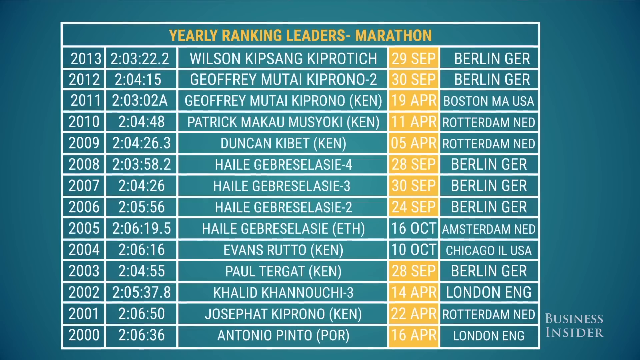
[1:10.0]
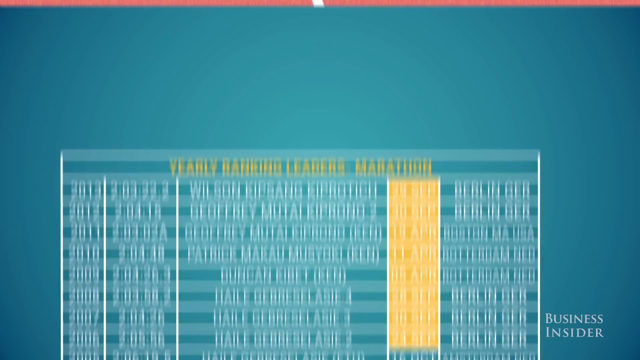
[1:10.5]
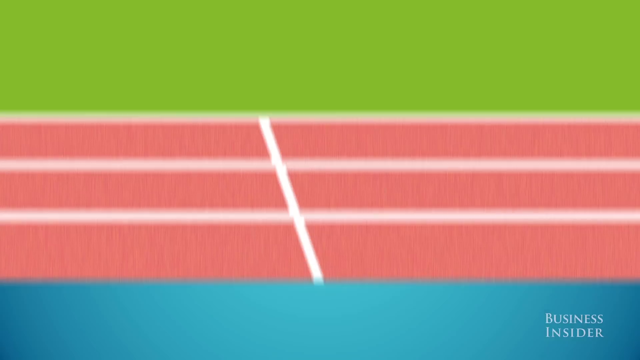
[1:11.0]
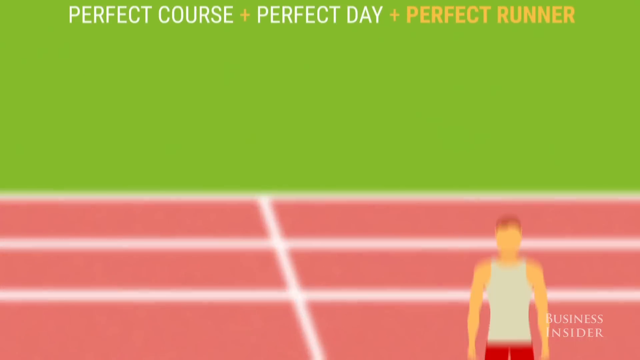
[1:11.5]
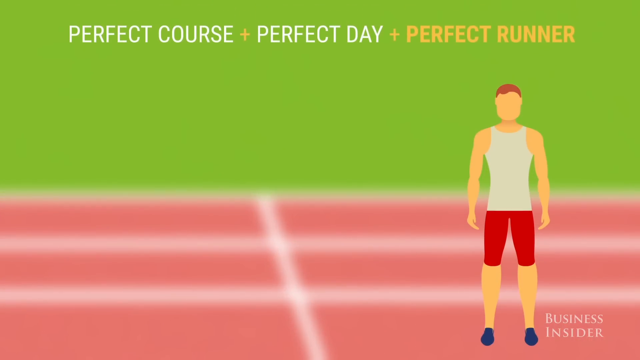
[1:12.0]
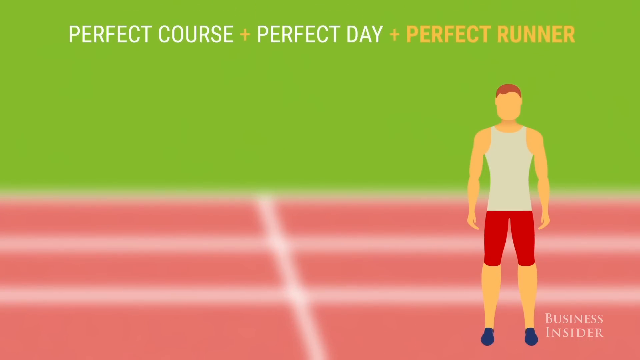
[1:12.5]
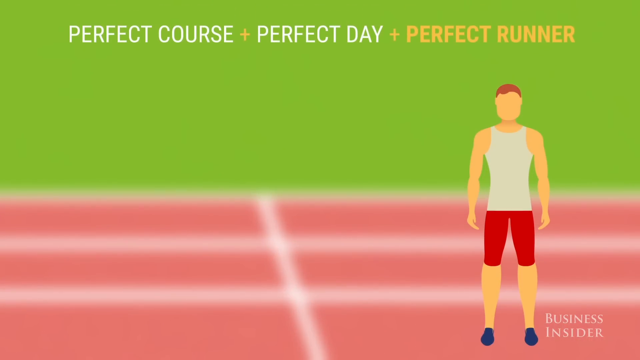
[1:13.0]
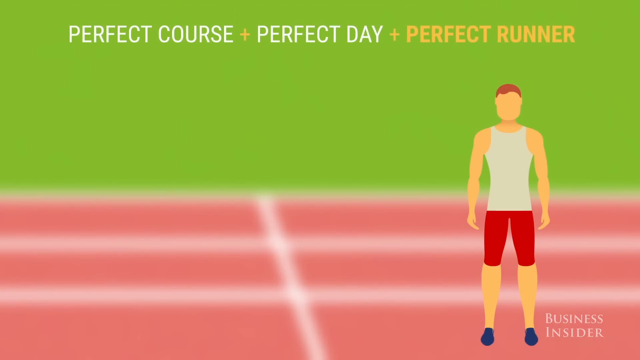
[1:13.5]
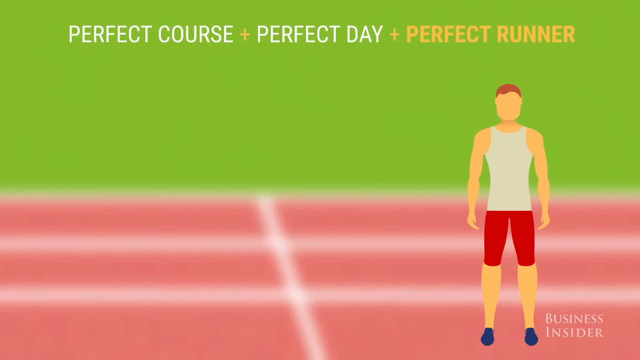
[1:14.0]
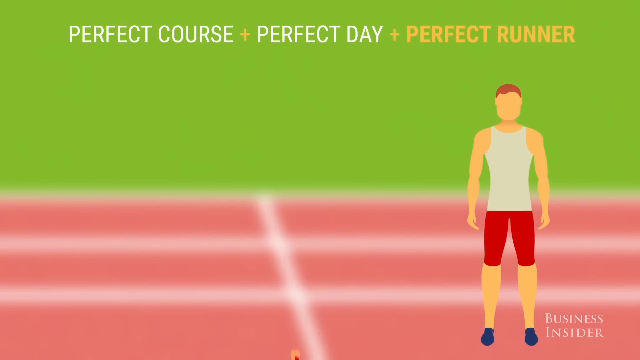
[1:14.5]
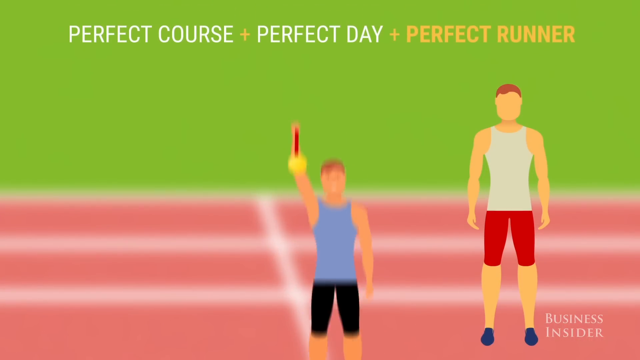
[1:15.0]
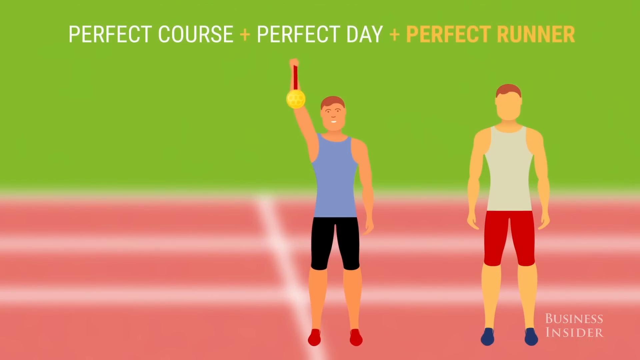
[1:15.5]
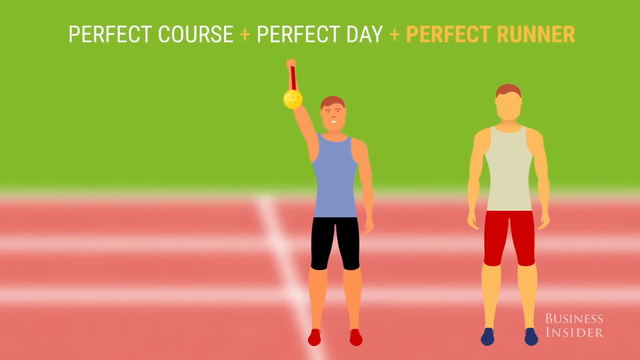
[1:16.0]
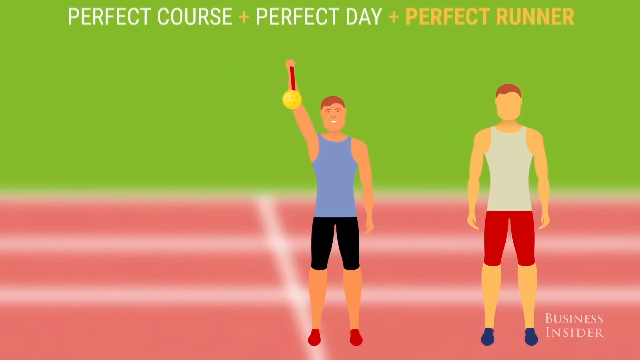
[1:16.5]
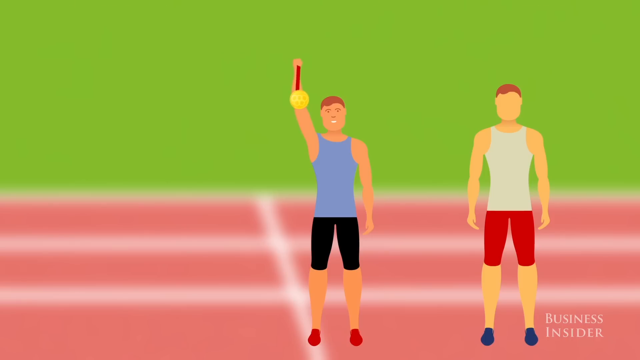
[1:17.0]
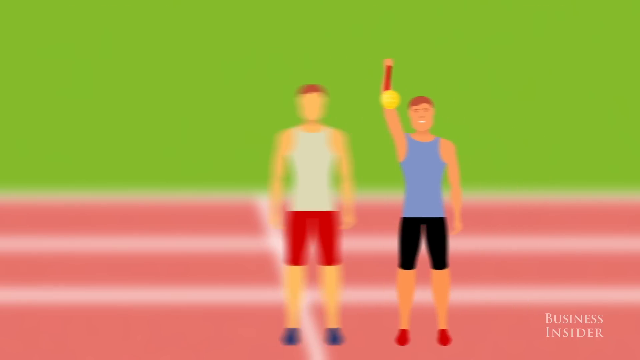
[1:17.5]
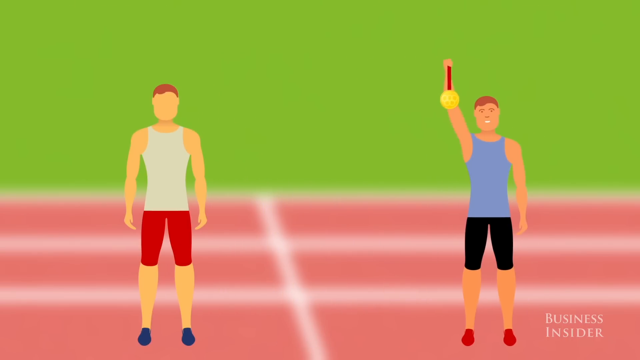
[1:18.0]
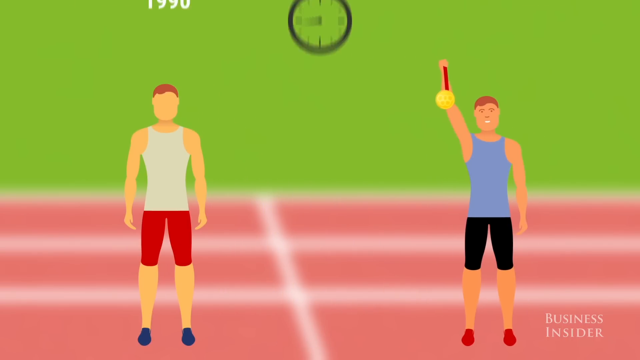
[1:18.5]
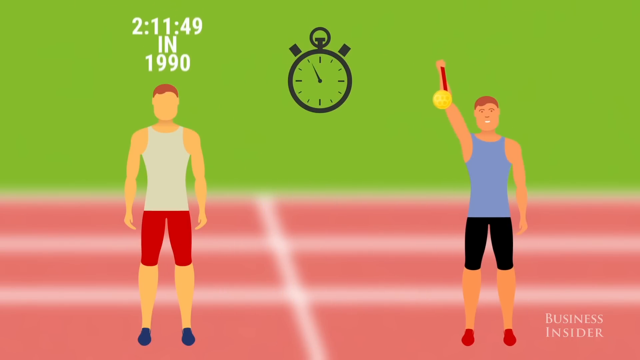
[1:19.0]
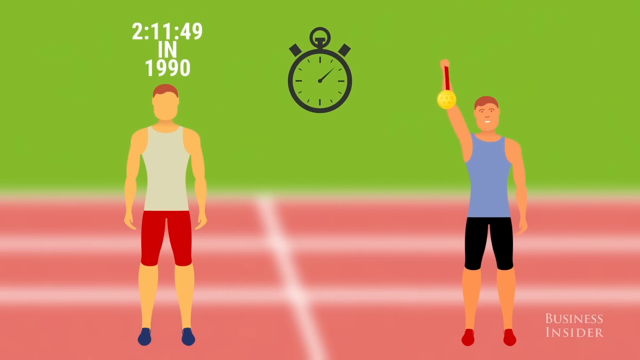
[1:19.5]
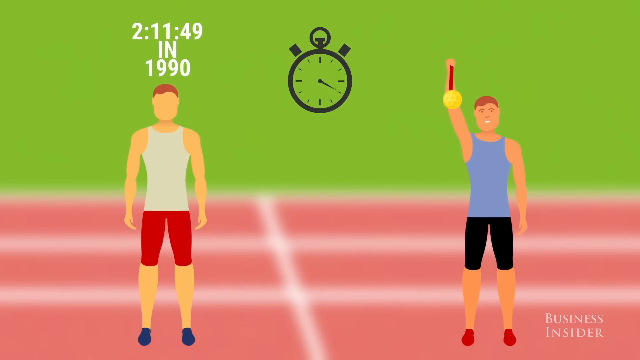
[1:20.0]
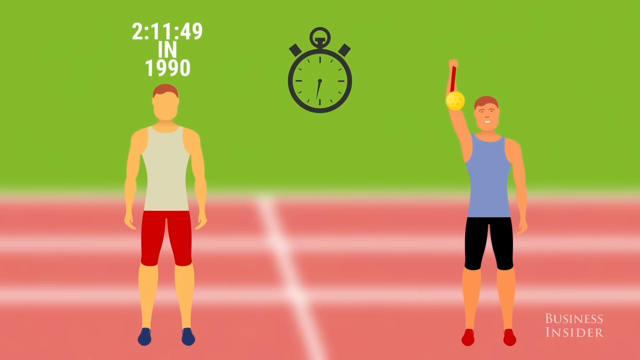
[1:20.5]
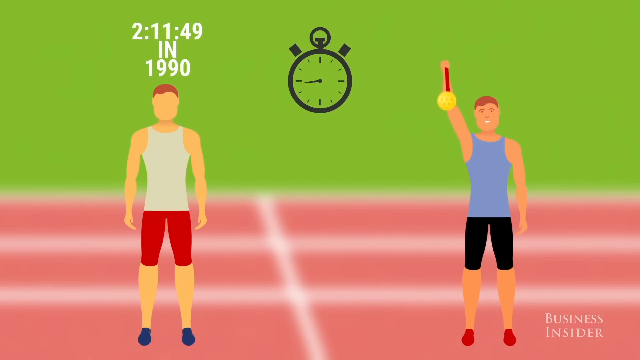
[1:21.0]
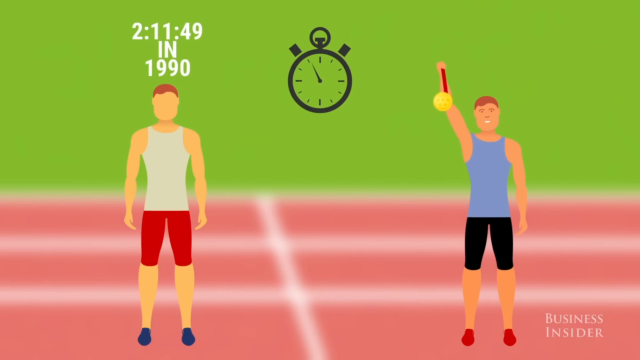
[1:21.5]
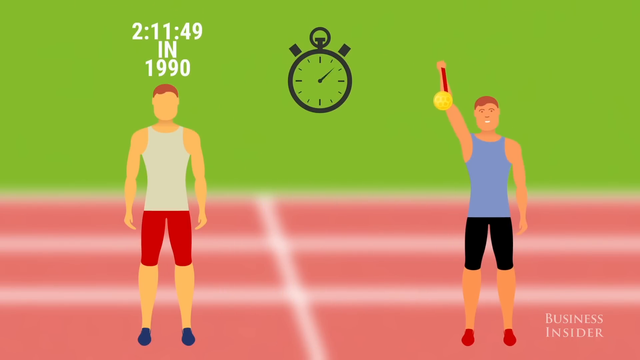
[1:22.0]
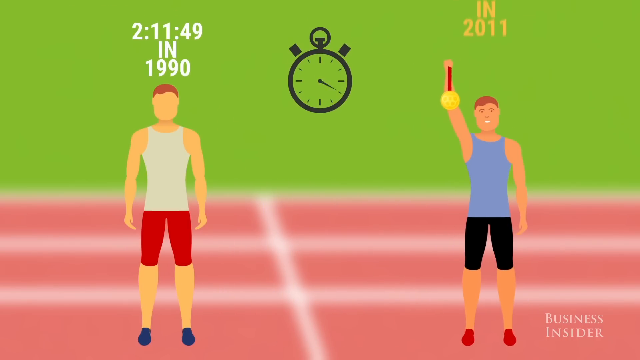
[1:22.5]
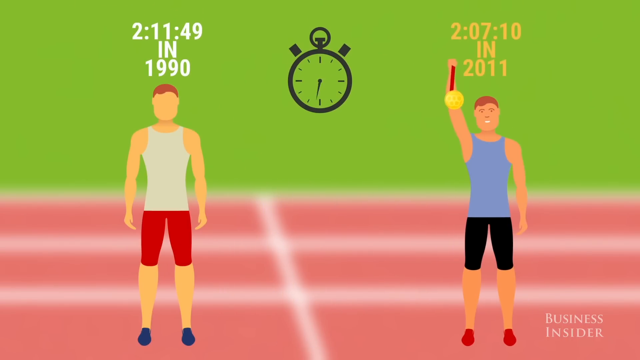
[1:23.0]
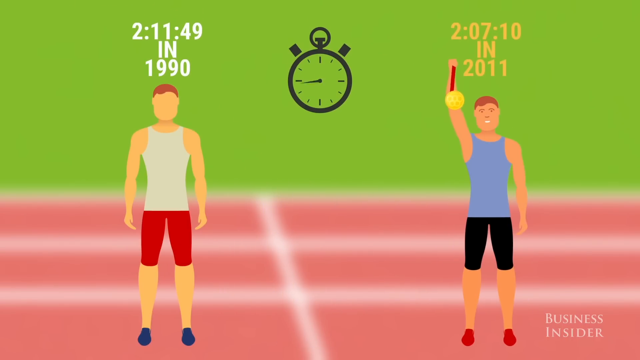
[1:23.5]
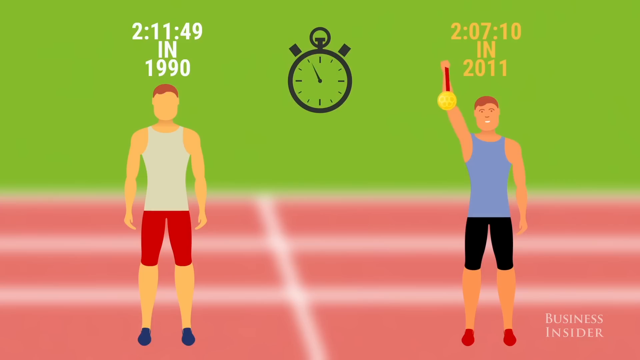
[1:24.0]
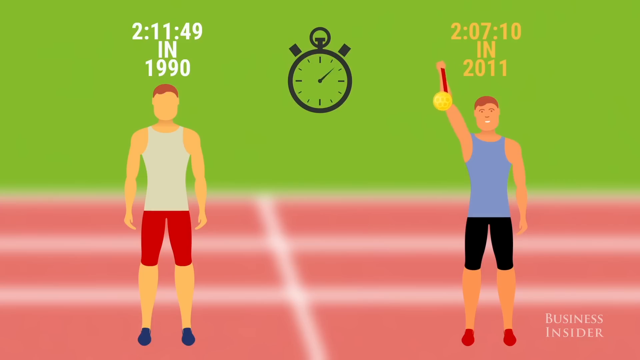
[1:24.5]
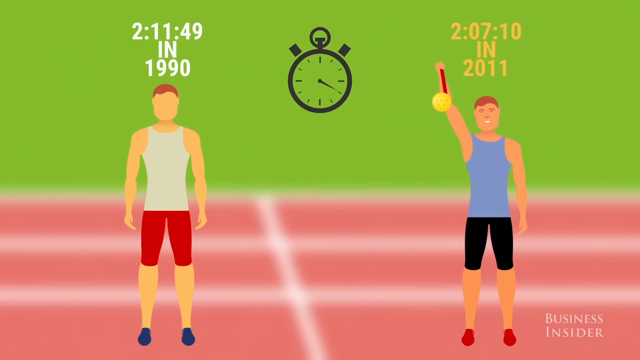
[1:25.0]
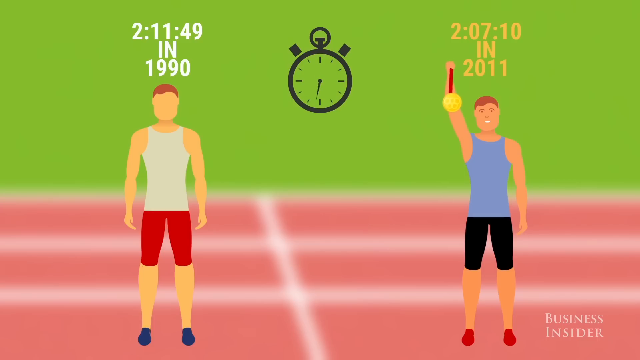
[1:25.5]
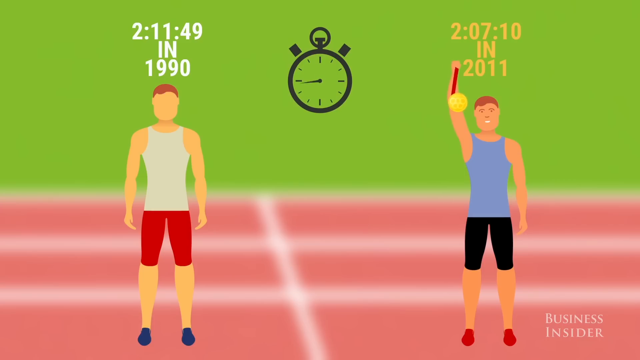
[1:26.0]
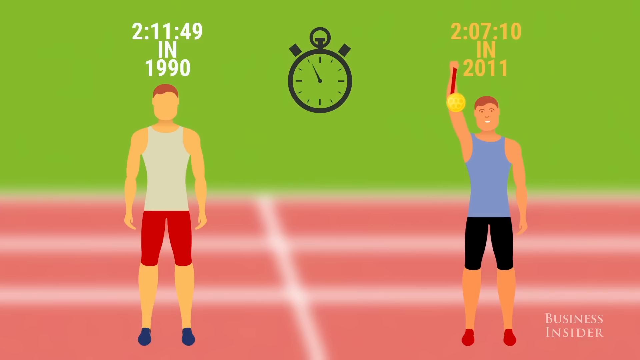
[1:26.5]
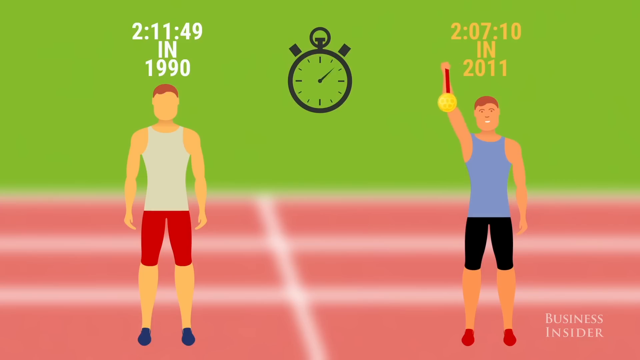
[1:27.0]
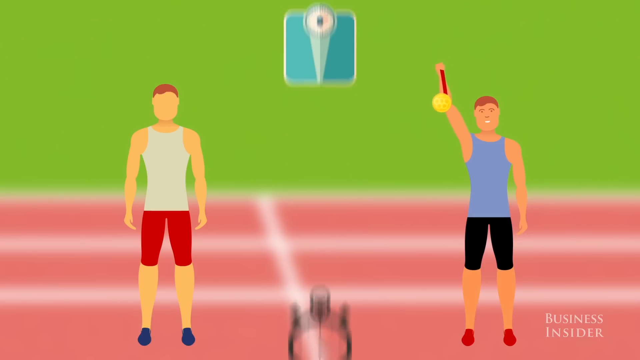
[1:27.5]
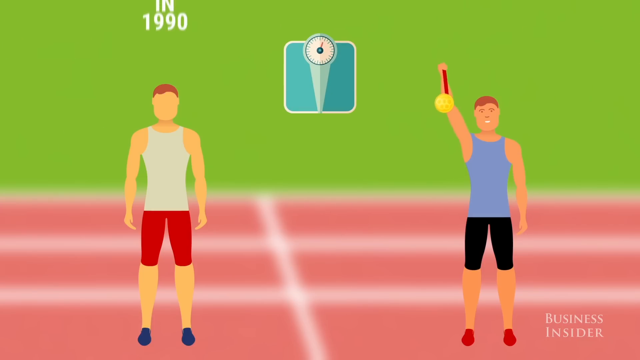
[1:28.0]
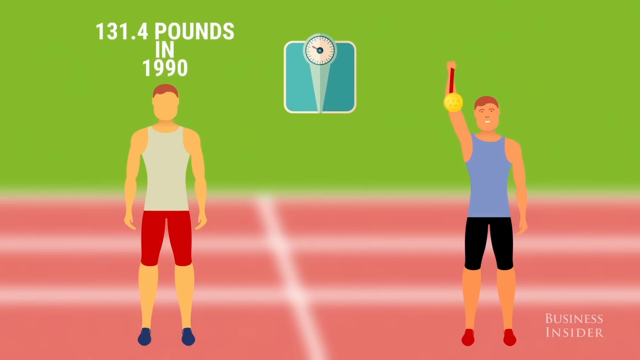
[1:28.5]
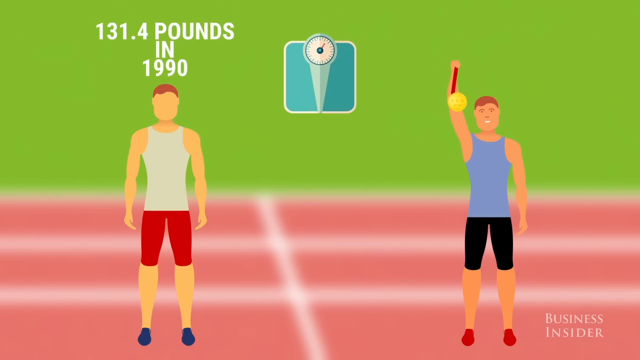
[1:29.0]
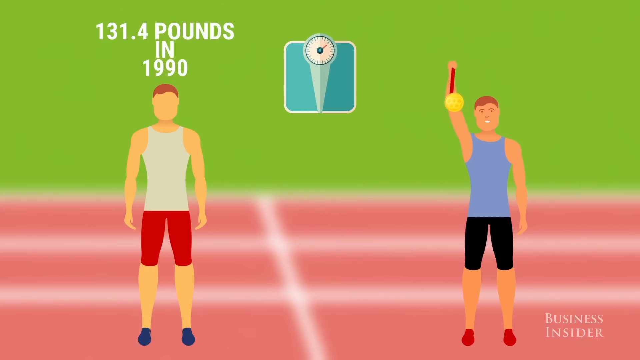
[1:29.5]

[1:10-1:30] The "yearly ranking leaders marathon" list shows the fastest time as 2 hours, 3 minutes and 22.2 seconds in 2013 in Berlin, Germany; most of the fastest times are from the Berlin marathon, and all the runners are a little over 2 hours. Text then reads "perfect course, perfect day, perfect runner," moving to the perfect runner part. Two men are shown, one holding up a gold medal. The first man has a time of 2 hours, 11 minutes and 49 seconds in 1990, next to a clock with a hand moving very fast, and the man with the gold medal has 2 hours, 7 minutes and 10 seconds in 2011. The first man's weight is then shown: 131.4 pounds in 1990.